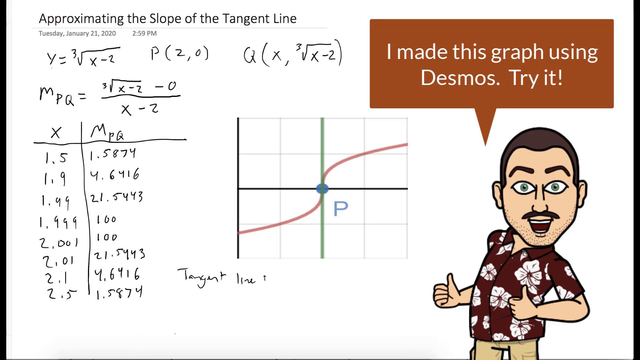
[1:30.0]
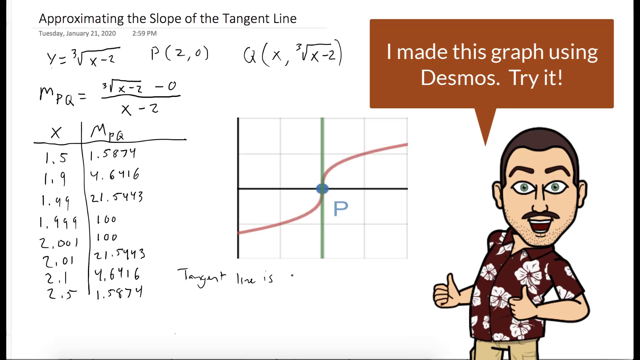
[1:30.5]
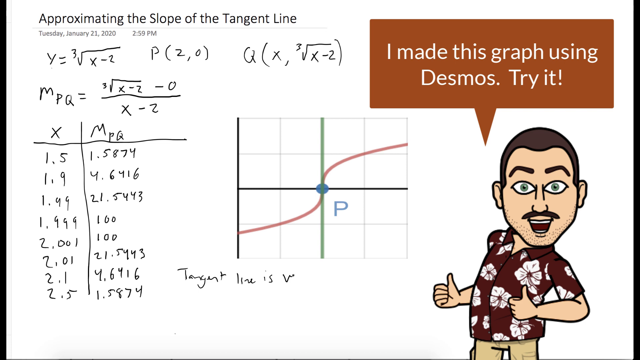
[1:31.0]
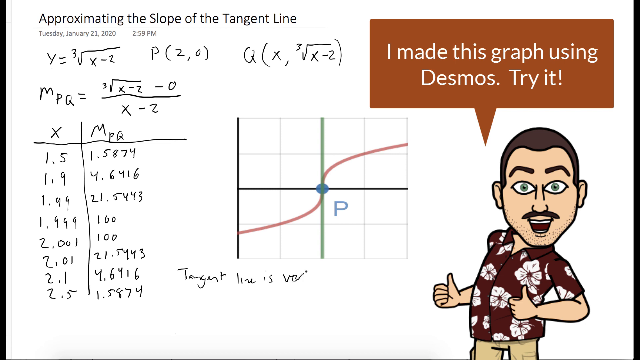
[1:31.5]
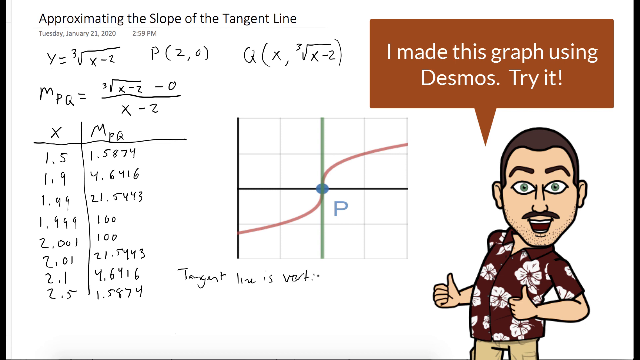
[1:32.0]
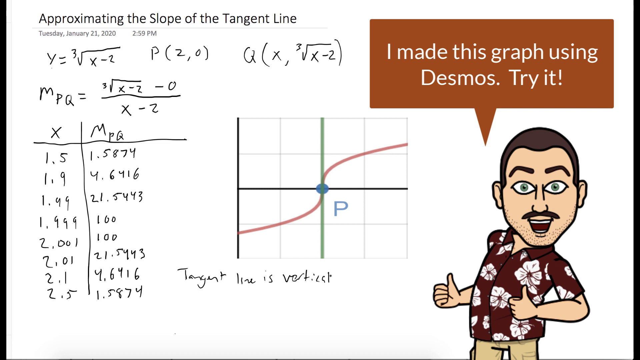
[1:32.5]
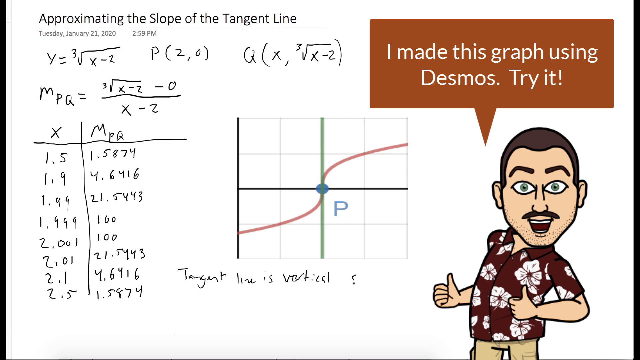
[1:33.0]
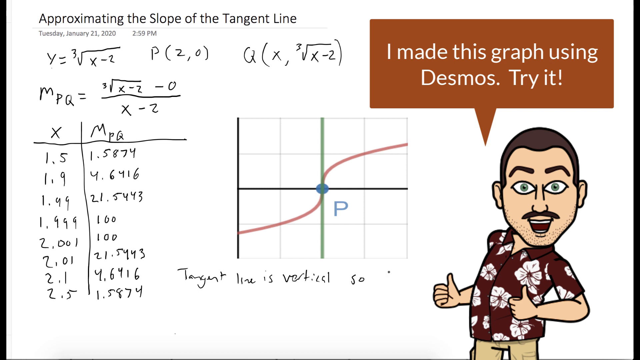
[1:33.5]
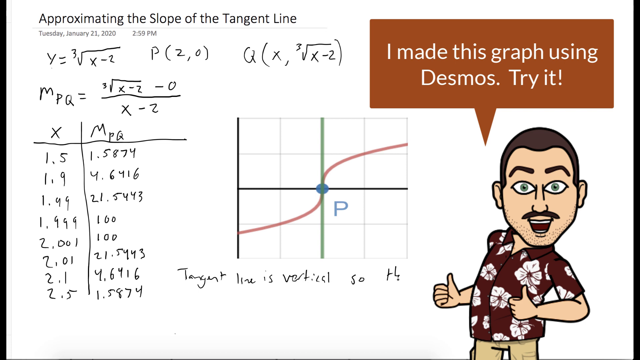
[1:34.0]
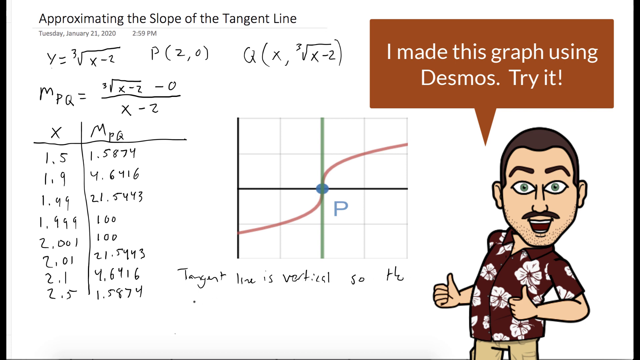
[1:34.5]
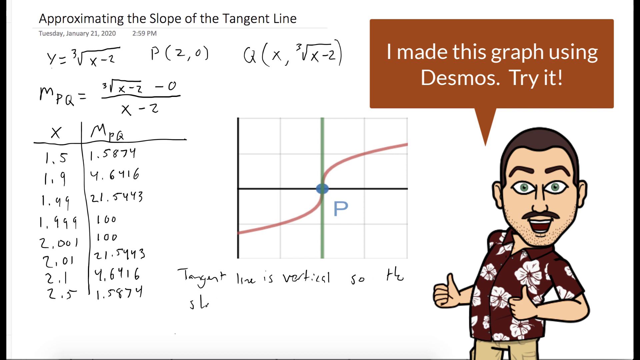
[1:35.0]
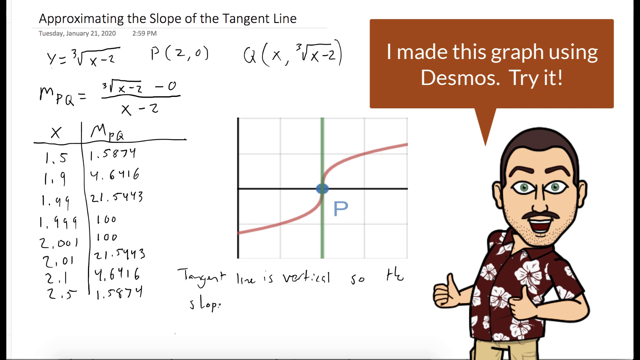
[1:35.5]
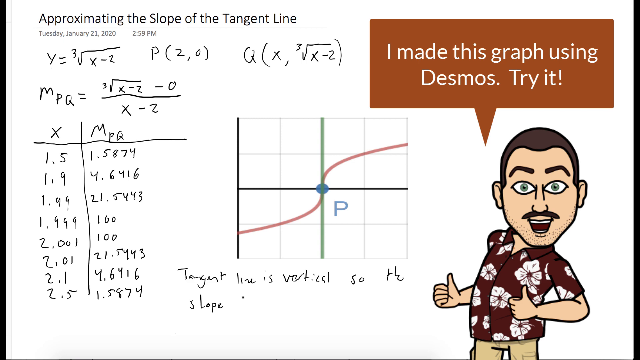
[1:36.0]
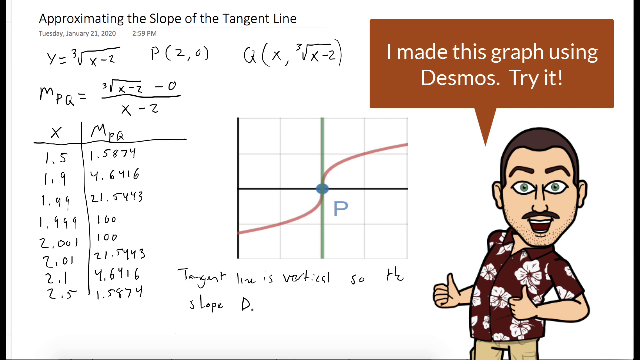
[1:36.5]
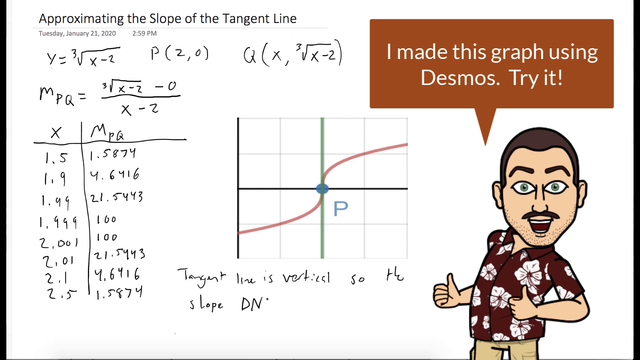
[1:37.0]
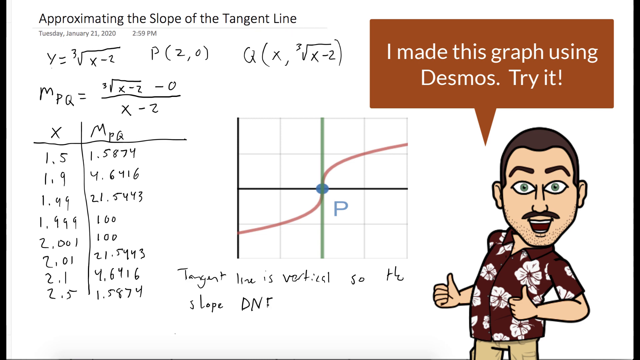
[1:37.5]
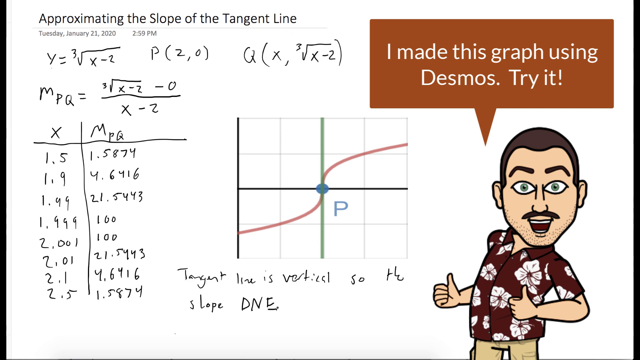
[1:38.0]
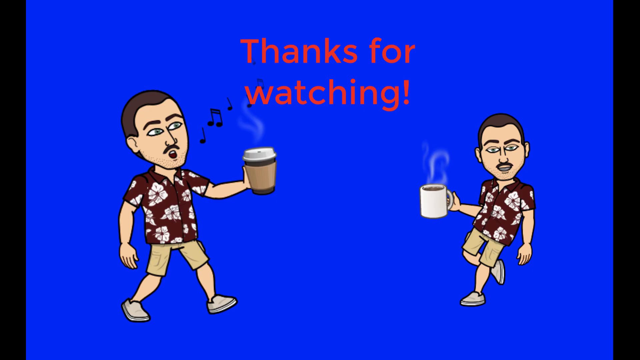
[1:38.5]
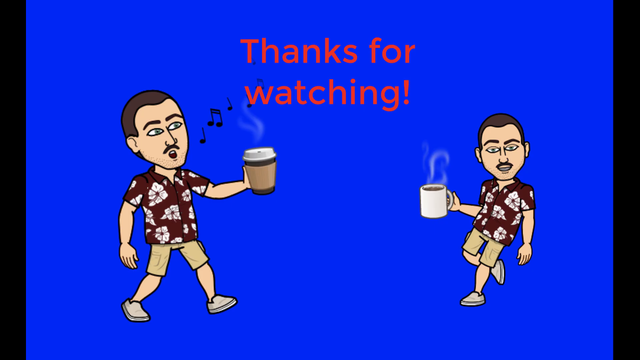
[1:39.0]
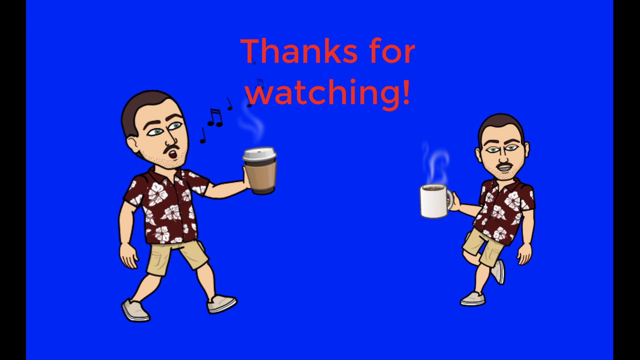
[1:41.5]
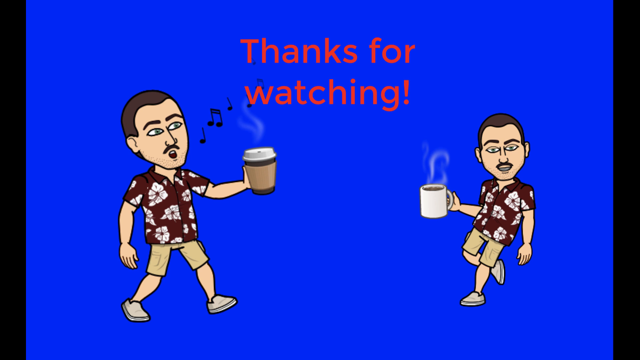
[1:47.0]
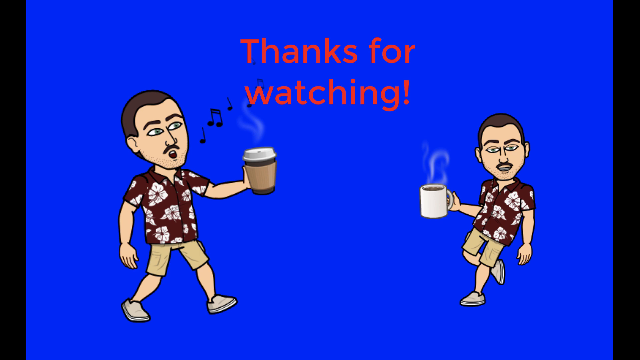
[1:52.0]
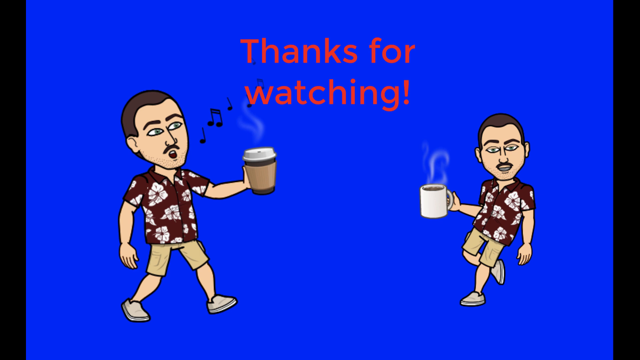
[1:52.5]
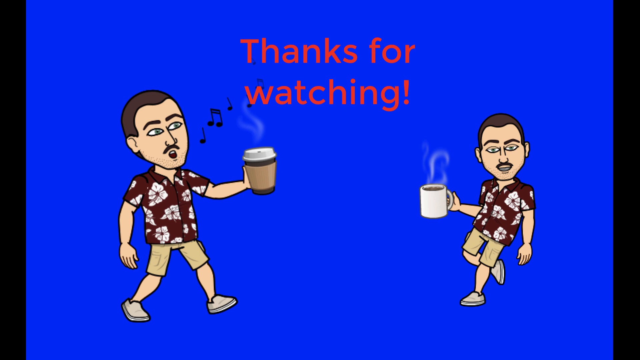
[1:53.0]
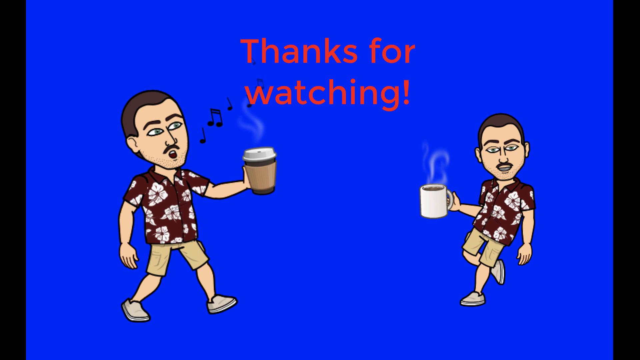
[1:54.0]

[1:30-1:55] A fictional cartoon character is at the right side of the screen, in the lower right corner. Both of his thumbs are pointed up, his arms are bent at the elbow with his hands at an angle close to his chest, and he stares out into the camera. His eyes are open in a cat-eye shape, his mouth is open, his mustache is slightly curved and his hair is brown; he looks very excited. Above him is a square bubble reading "I made this graph using Desmos, try it." The graph is in the center of the page: a square graph with a line going up and down and another going across, meeting at a blue dot and forming four squares. A red curved line starts in the middle at the blue dot and curves up to the right outer side of the box, and another line starts at the blue dot and curves down and out to the left side of the box. In the right box, a P is in the upper left corner near the blue dot. The box in the very top left corner of the four-box pattern is empty.